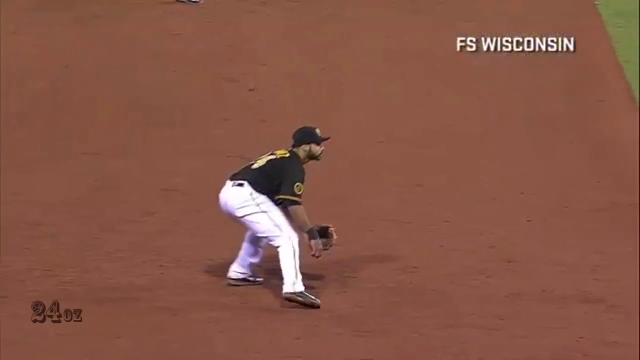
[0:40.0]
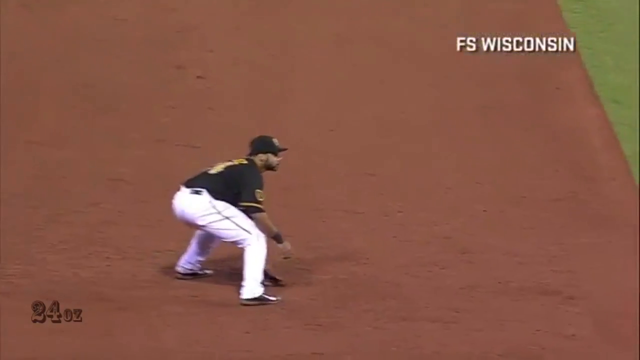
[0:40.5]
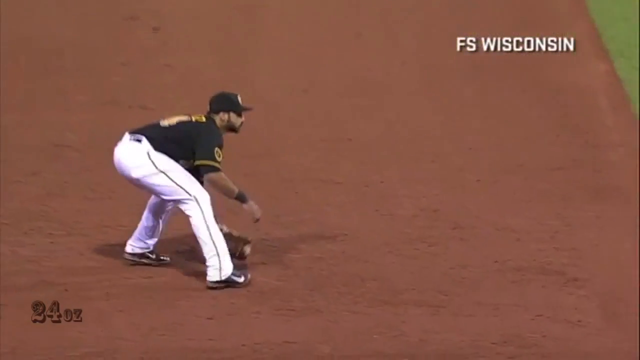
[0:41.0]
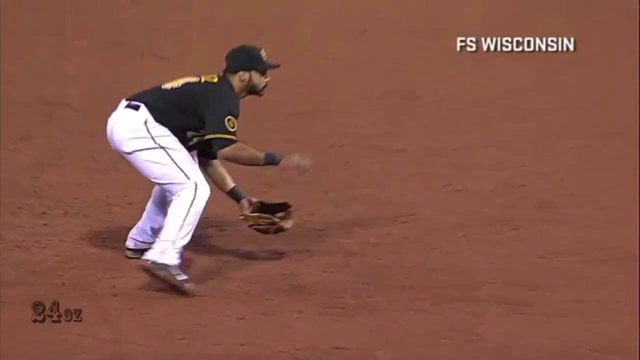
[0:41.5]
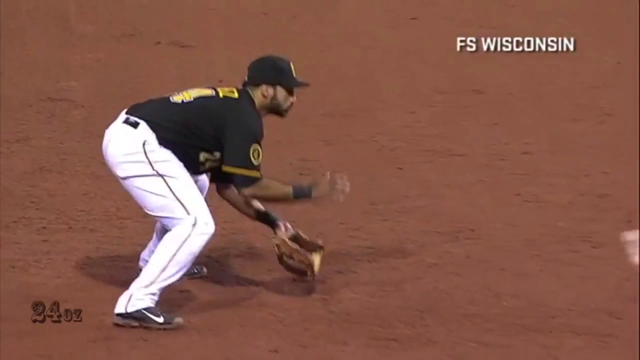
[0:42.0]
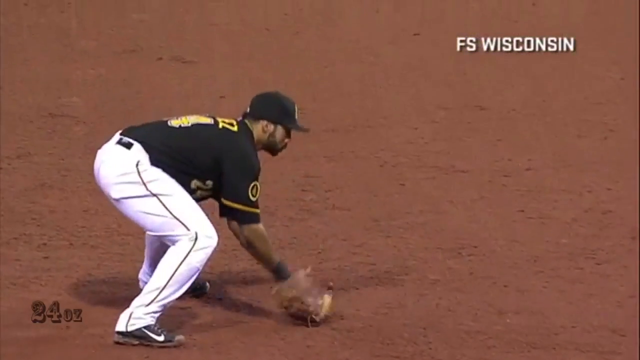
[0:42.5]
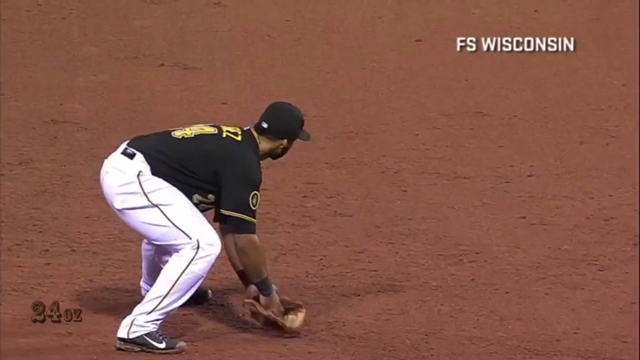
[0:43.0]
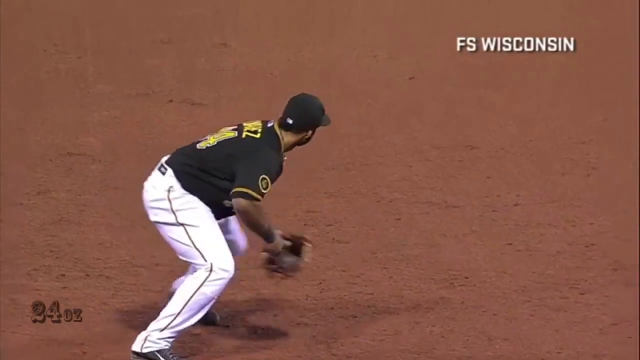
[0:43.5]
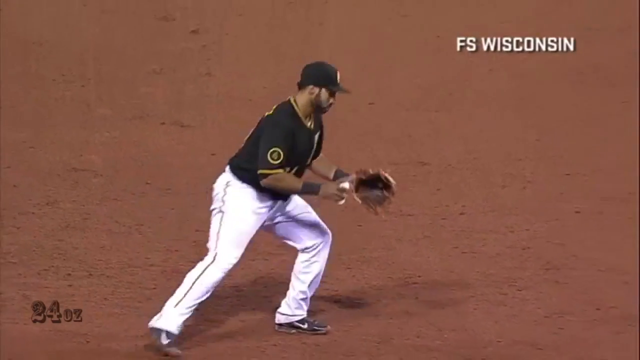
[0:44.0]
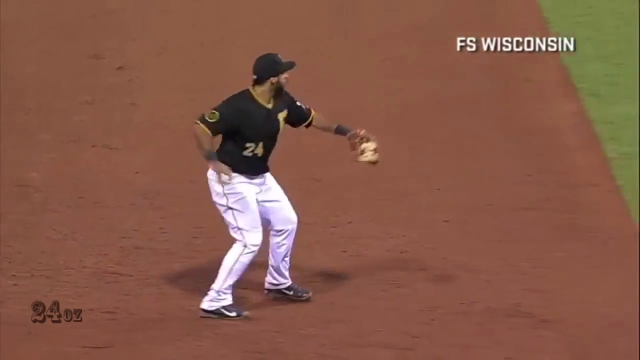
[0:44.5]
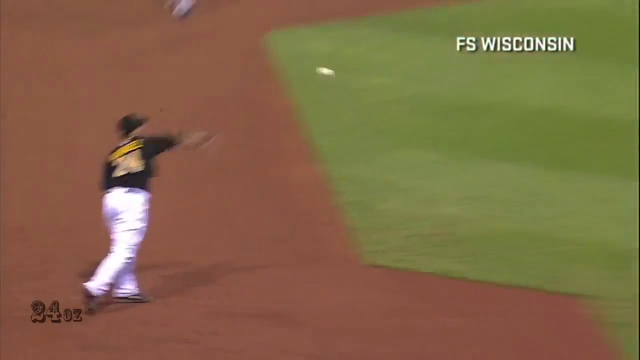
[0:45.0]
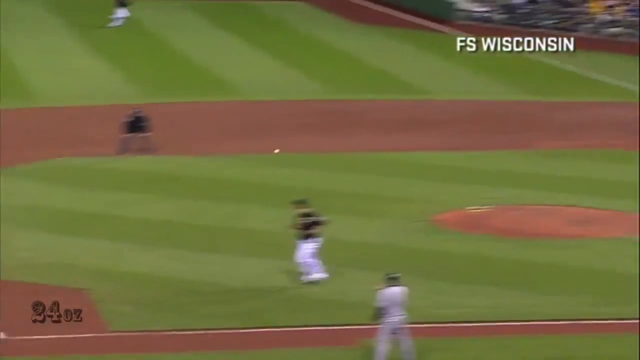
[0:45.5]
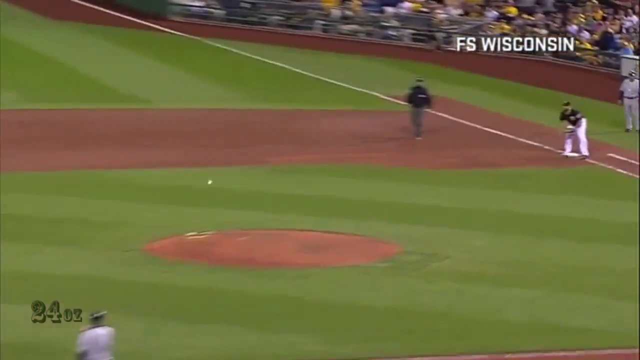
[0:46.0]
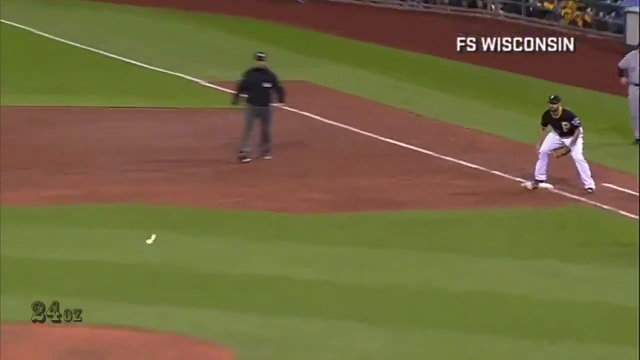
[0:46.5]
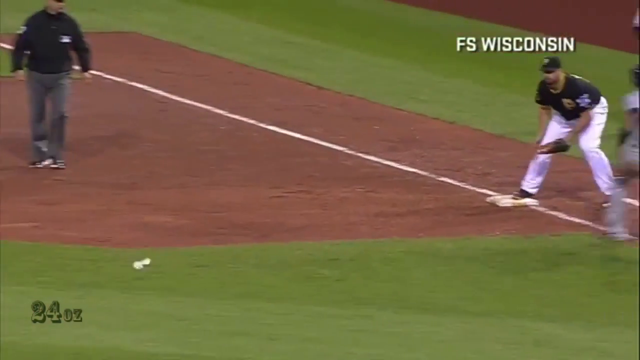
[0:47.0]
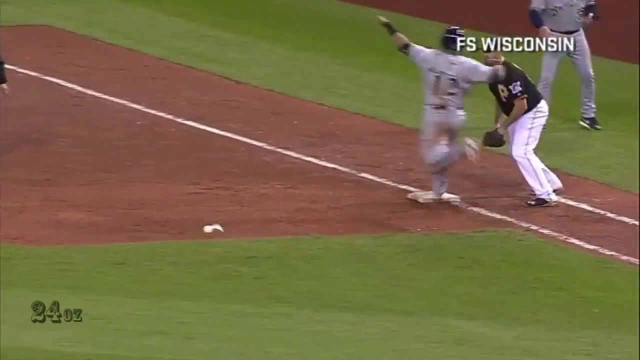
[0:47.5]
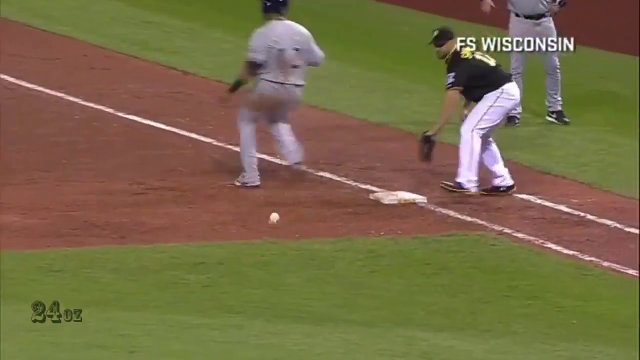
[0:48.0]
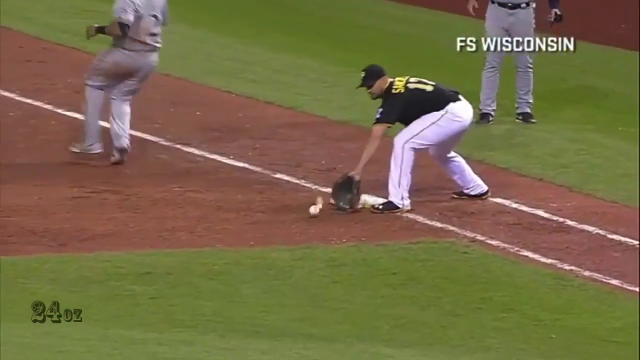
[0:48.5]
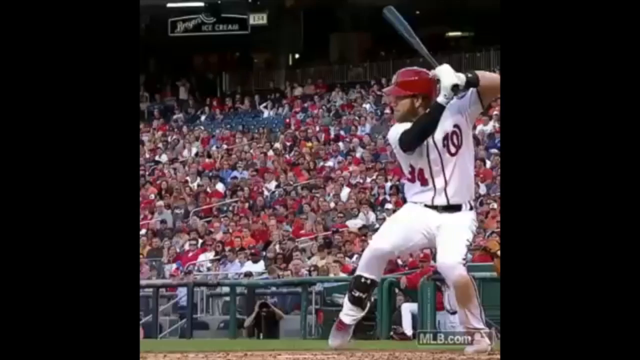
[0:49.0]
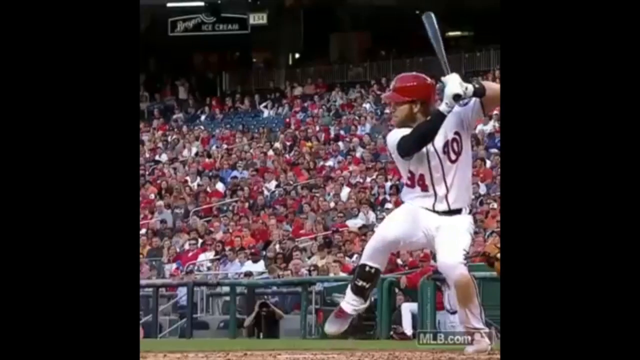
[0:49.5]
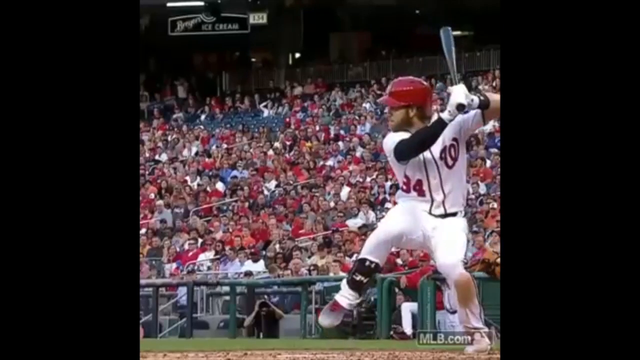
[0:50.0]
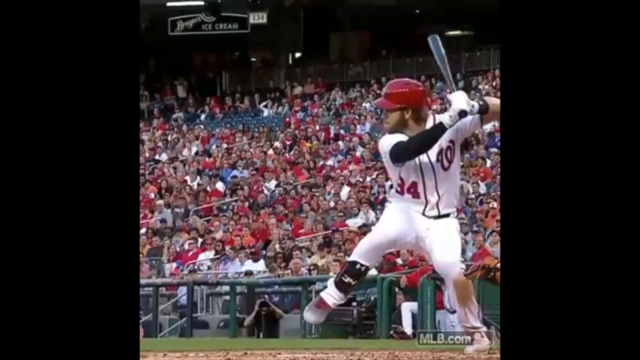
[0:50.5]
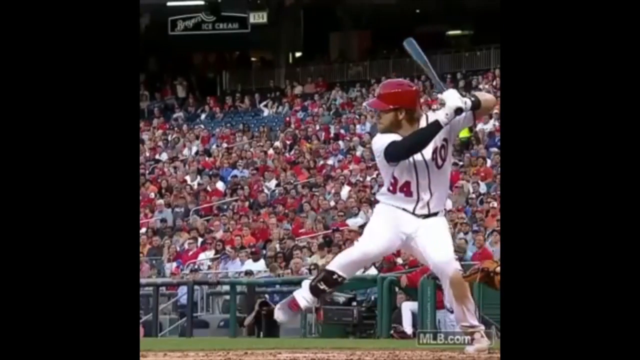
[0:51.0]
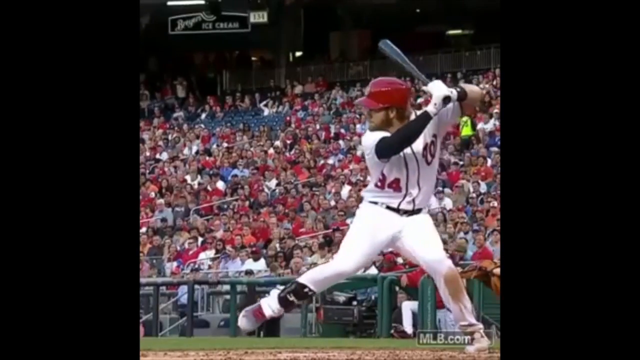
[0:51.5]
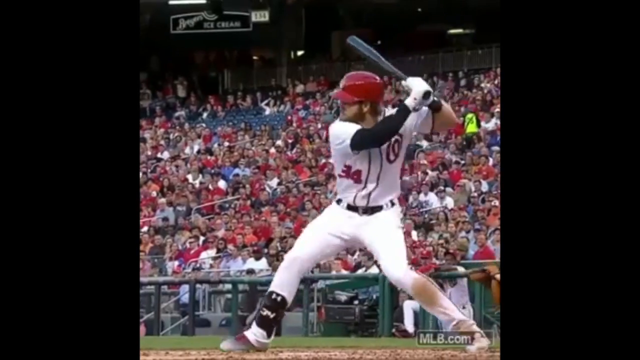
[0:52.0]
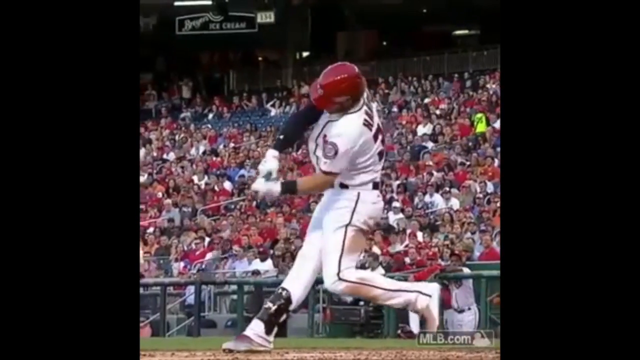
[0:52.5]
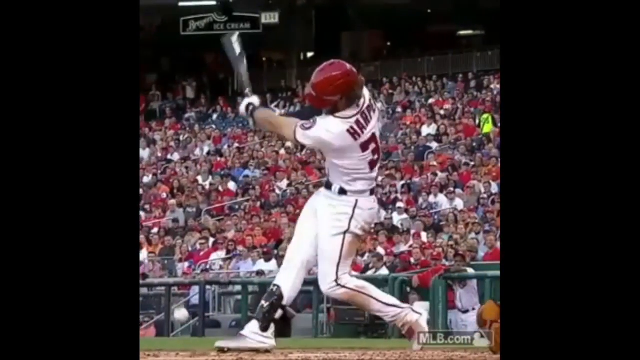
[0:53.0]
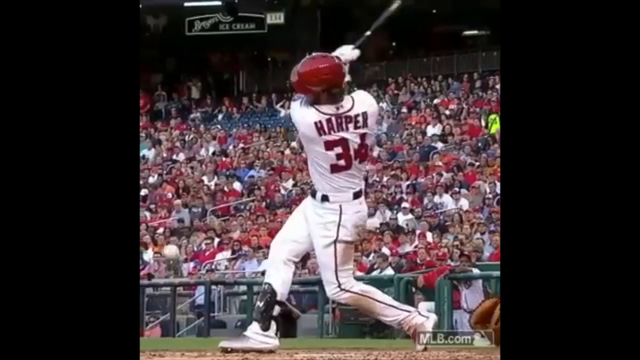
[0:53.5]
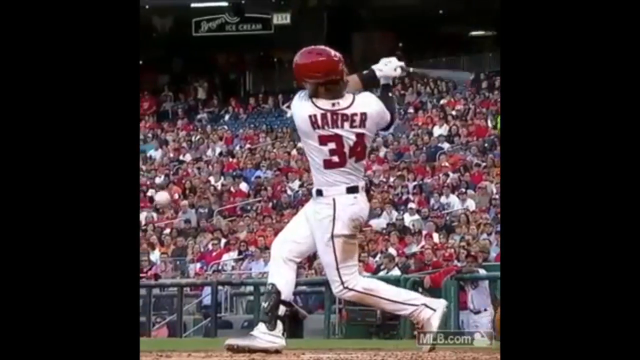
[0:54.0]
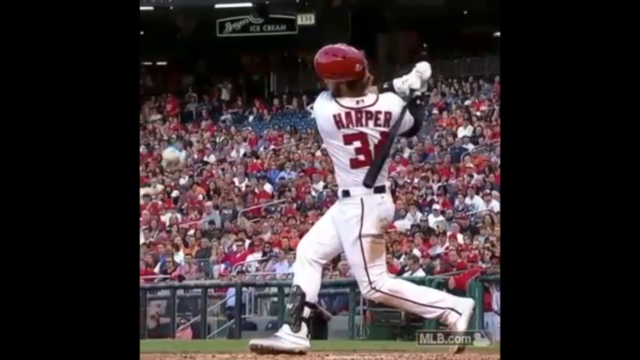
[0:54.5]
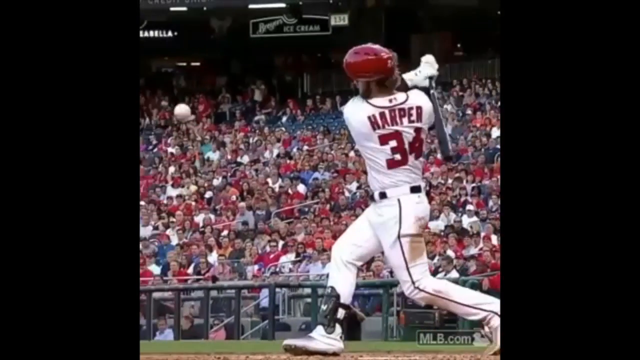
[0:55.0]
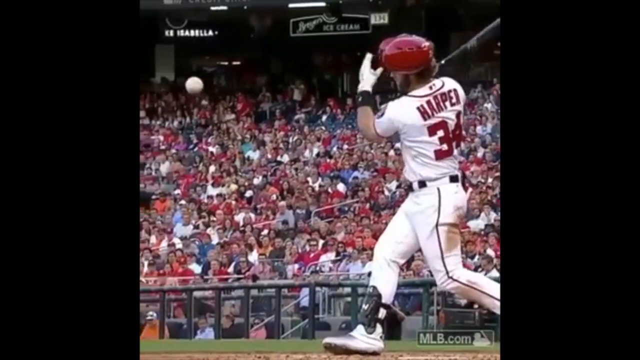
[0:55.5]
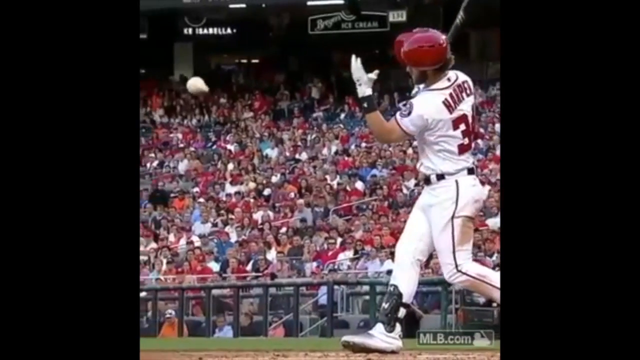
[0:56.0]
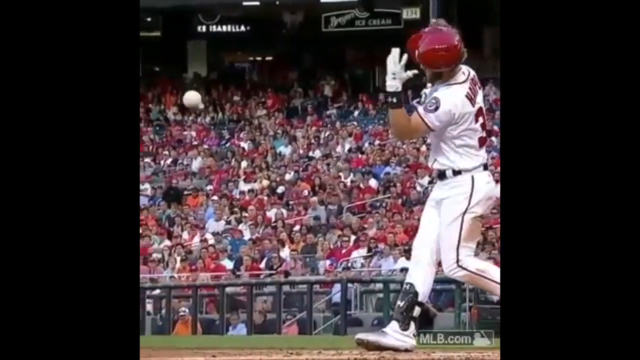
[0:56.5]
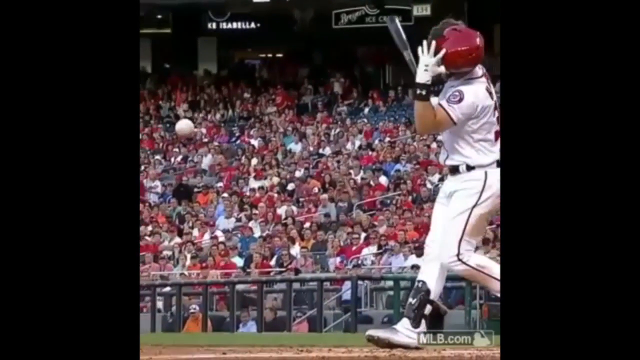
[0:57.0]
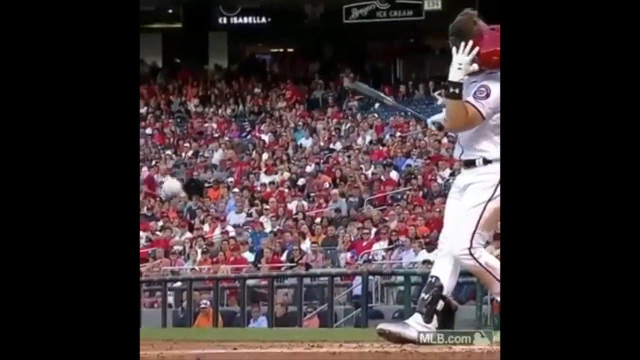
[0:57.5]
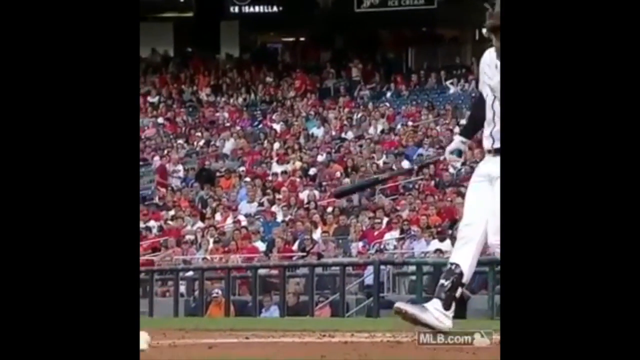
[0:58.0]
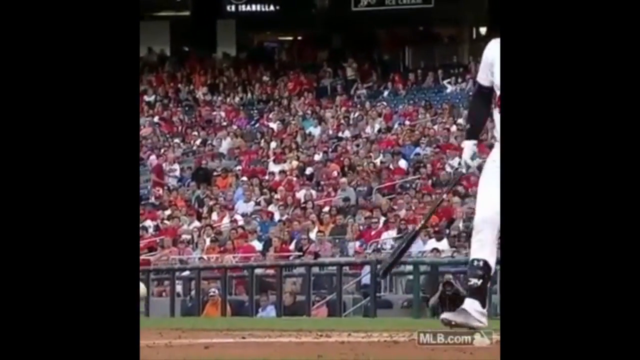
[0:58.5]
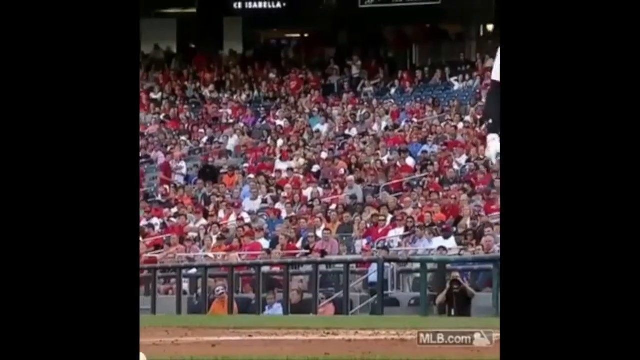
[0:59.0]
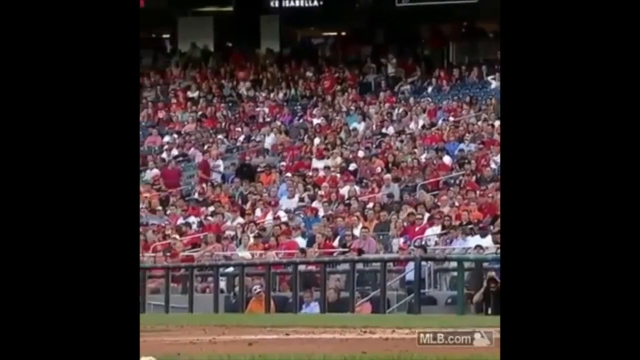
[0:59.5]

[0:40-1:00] A replay shows the ball going to the third baseman, who looks at the ball before throwing it. The ball rips halfway through the throw, sputtering out and not making it to first base. The batter loses his red helmet in the process of hitting the ball. Most of the stadium is filled with people described as players wearing red, apparently indicating that the red-uniformed team is at home. Other team members in the dugout look on at the ripped-open ball.